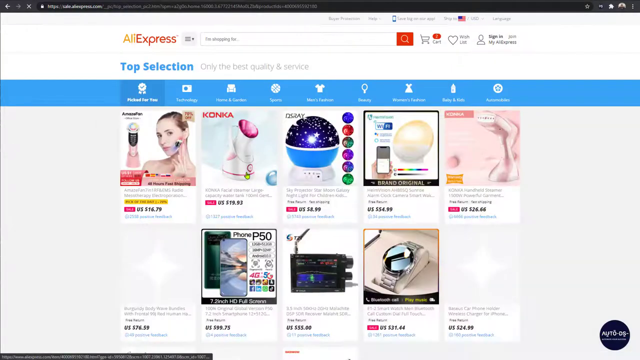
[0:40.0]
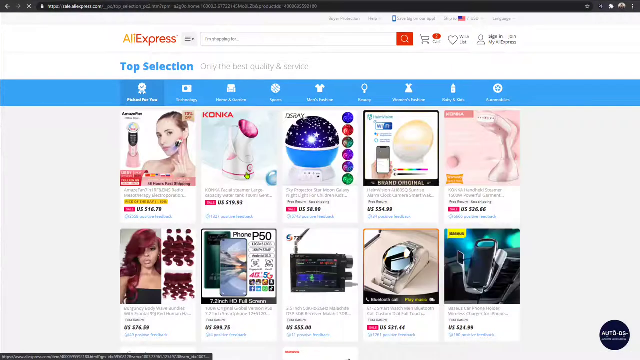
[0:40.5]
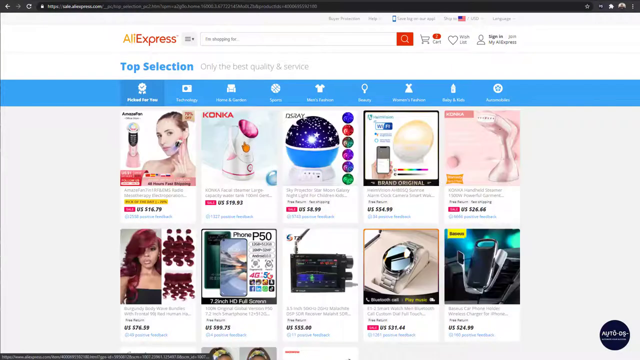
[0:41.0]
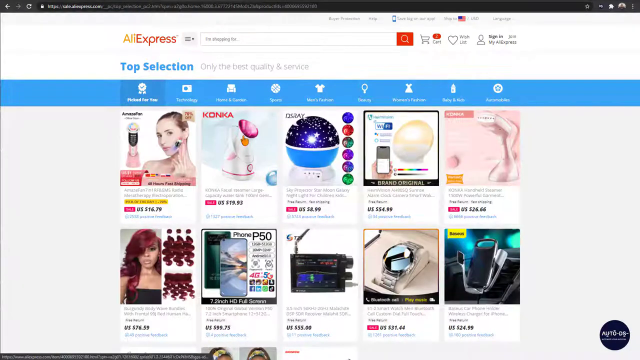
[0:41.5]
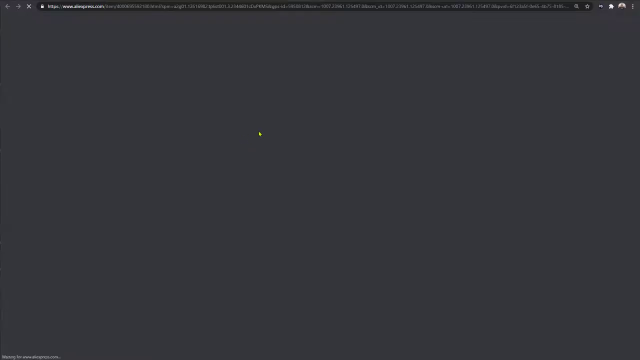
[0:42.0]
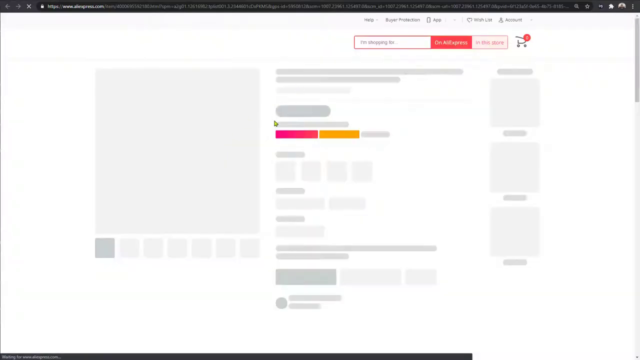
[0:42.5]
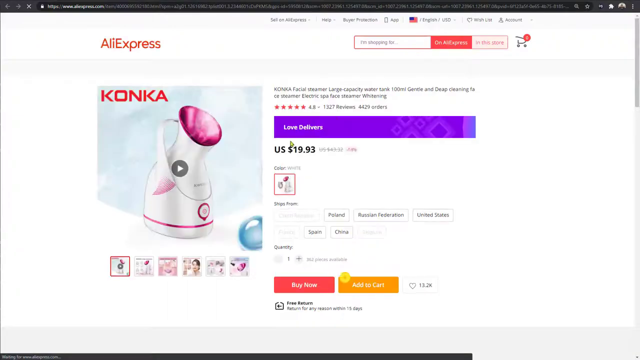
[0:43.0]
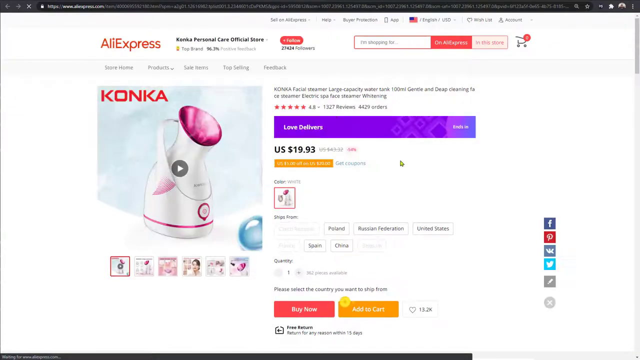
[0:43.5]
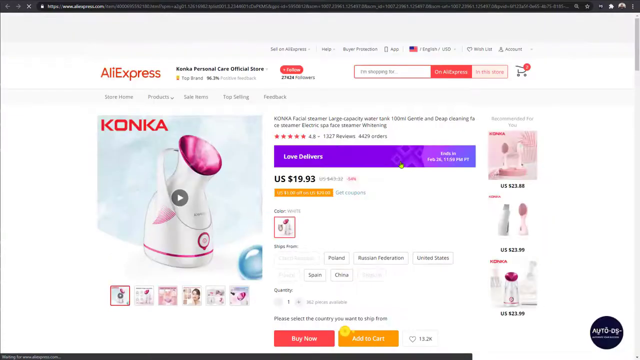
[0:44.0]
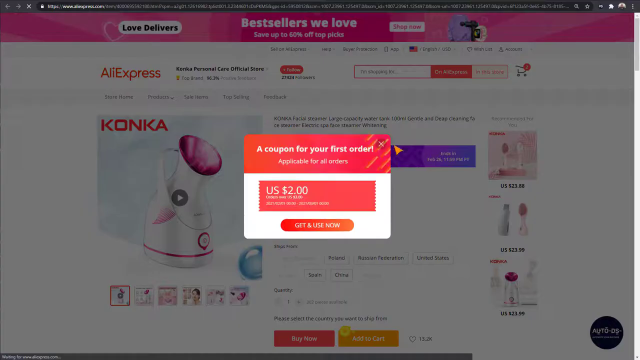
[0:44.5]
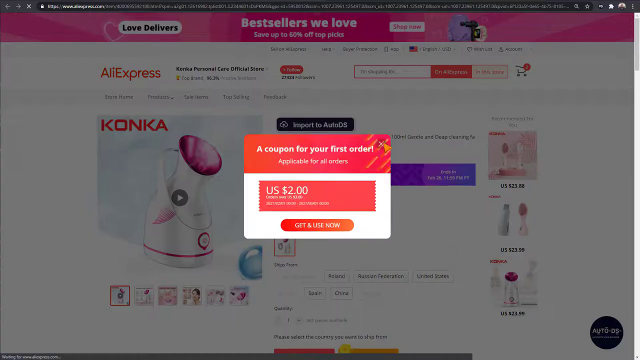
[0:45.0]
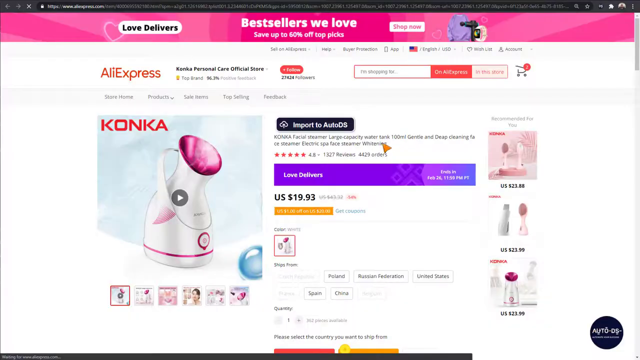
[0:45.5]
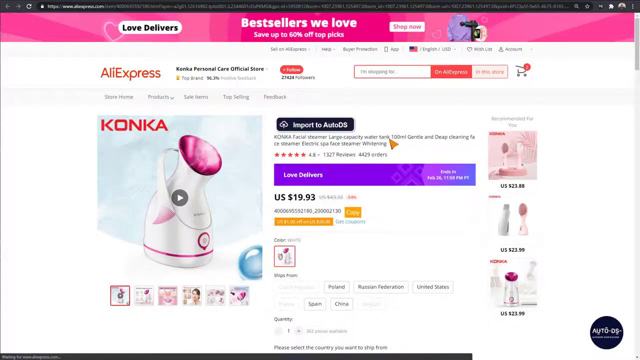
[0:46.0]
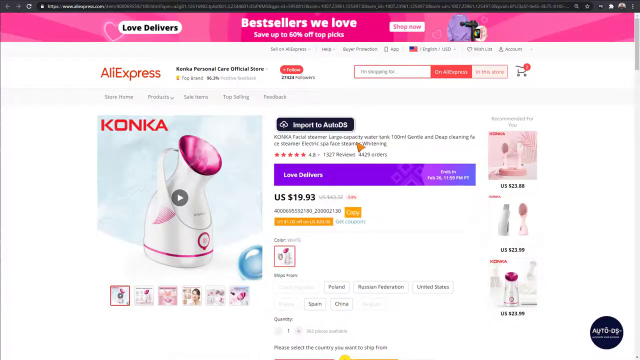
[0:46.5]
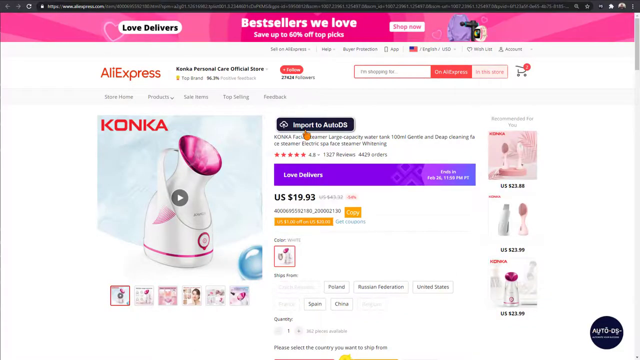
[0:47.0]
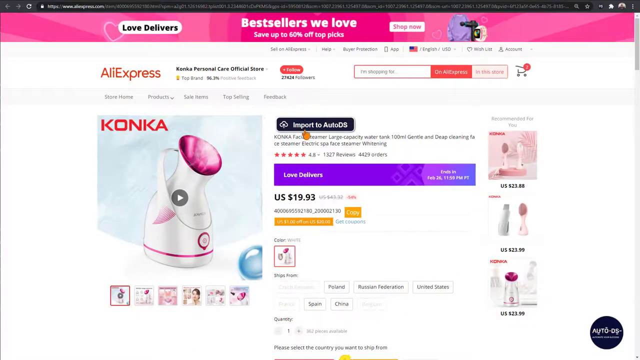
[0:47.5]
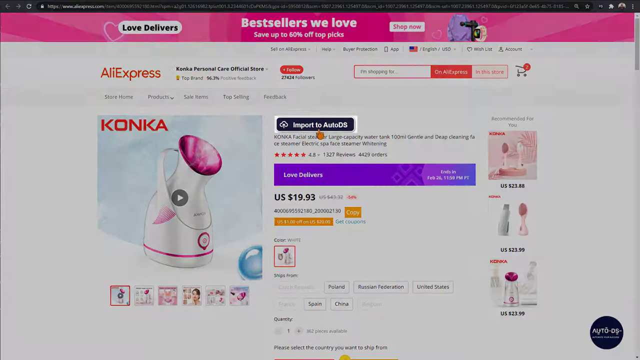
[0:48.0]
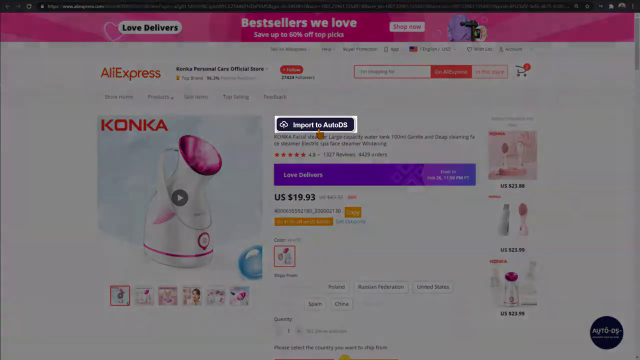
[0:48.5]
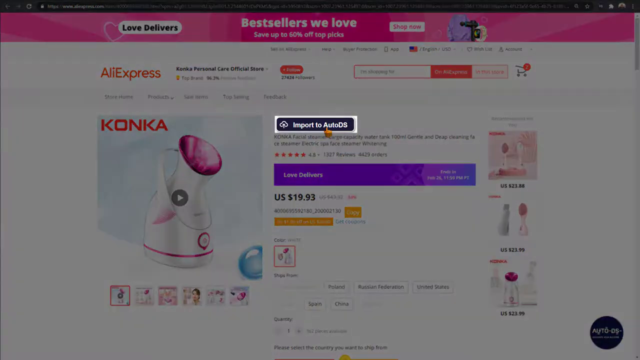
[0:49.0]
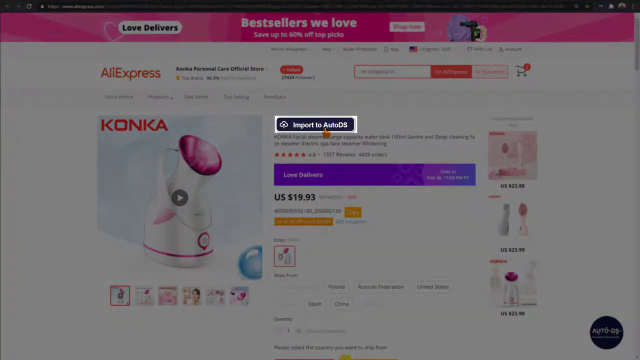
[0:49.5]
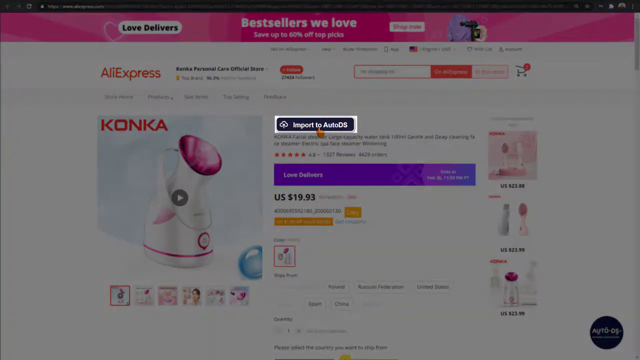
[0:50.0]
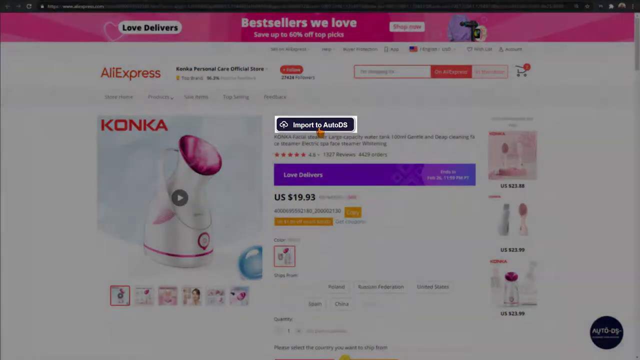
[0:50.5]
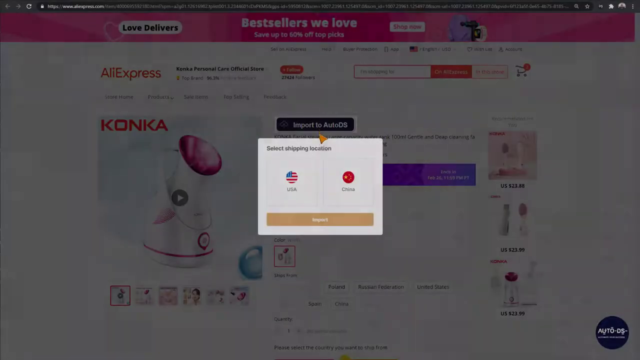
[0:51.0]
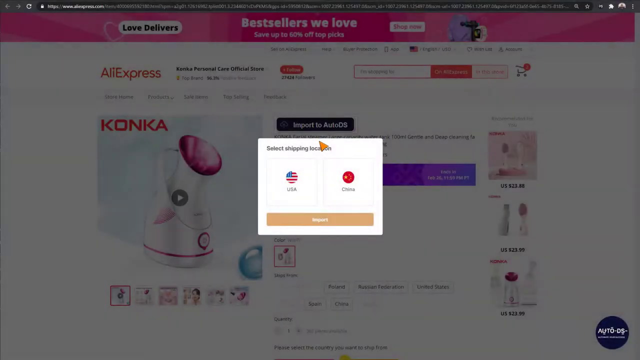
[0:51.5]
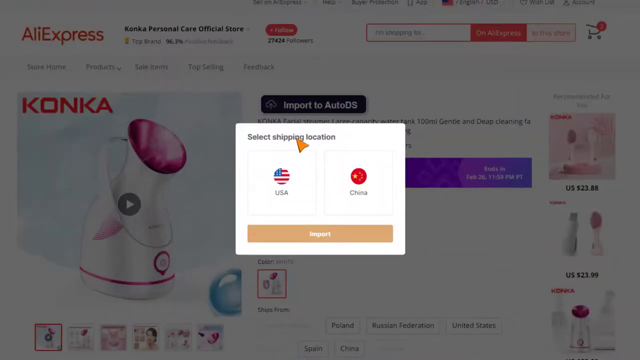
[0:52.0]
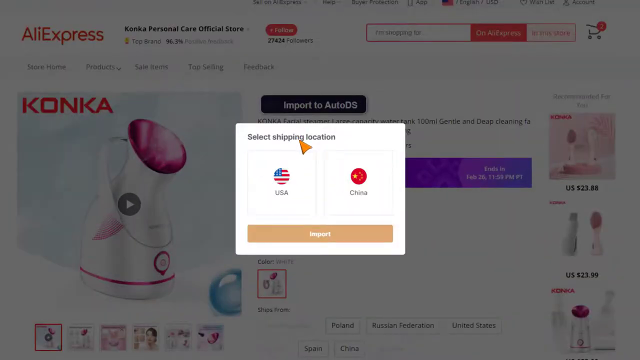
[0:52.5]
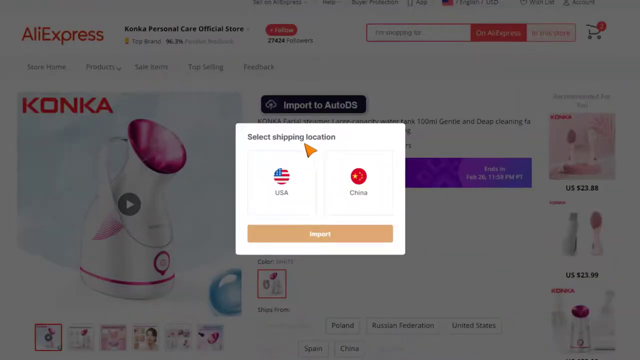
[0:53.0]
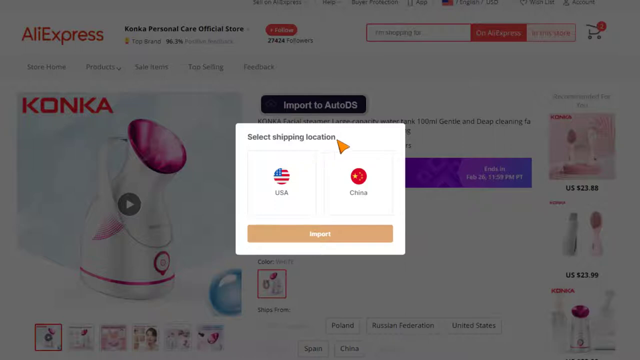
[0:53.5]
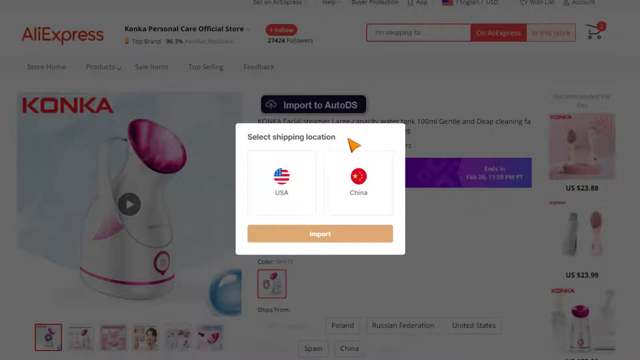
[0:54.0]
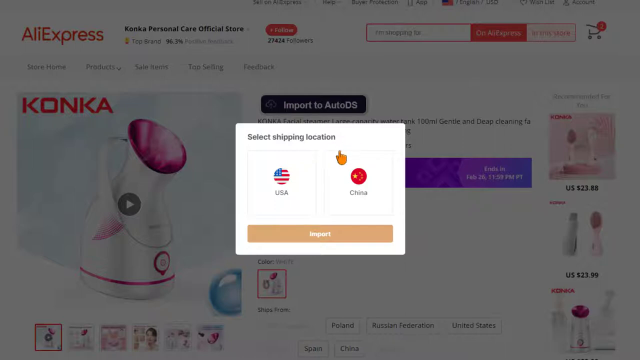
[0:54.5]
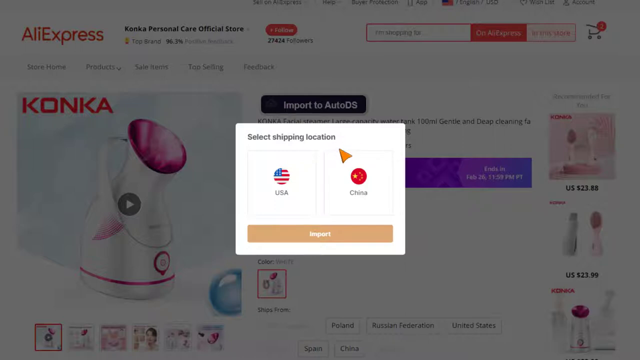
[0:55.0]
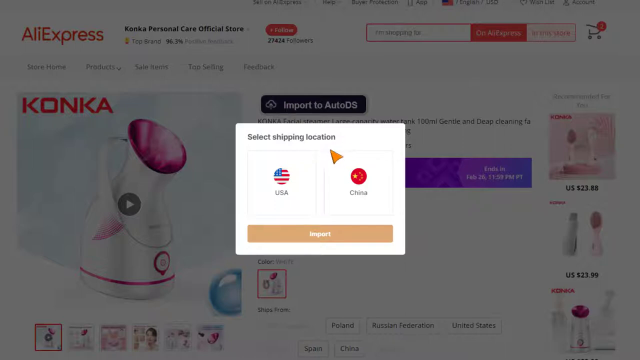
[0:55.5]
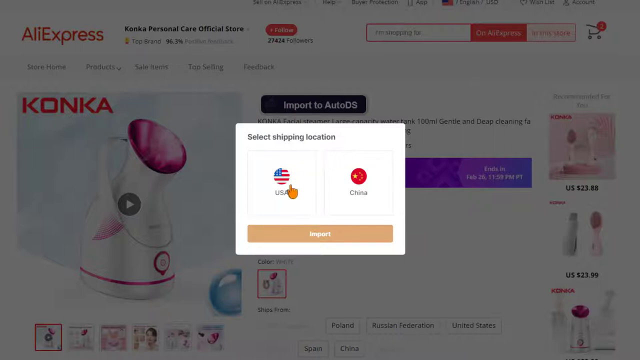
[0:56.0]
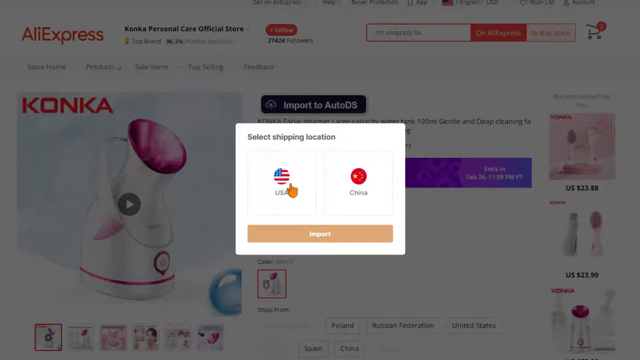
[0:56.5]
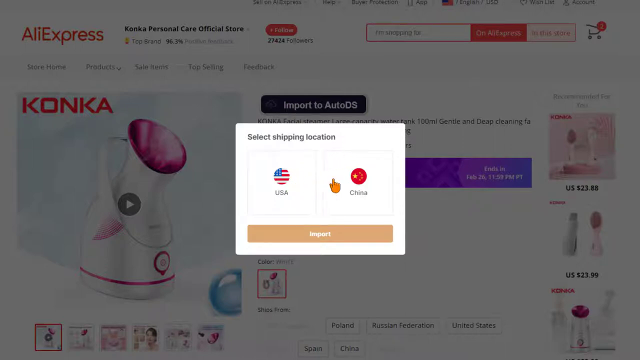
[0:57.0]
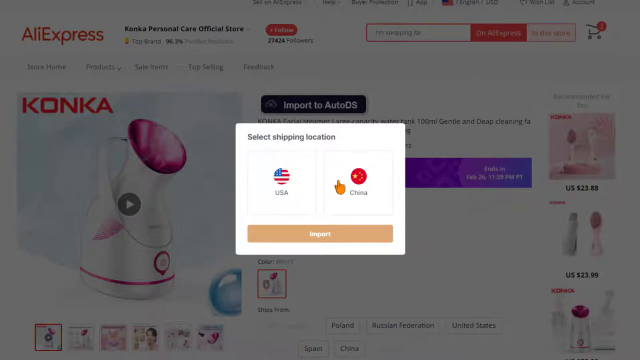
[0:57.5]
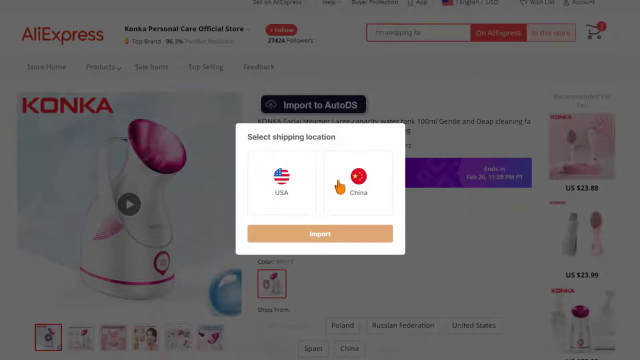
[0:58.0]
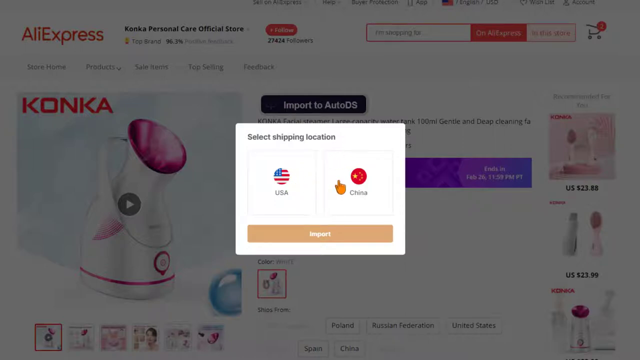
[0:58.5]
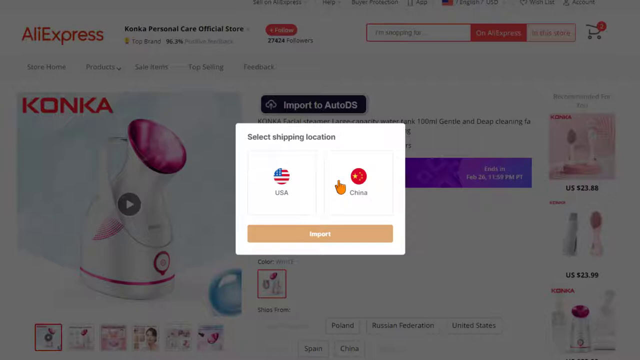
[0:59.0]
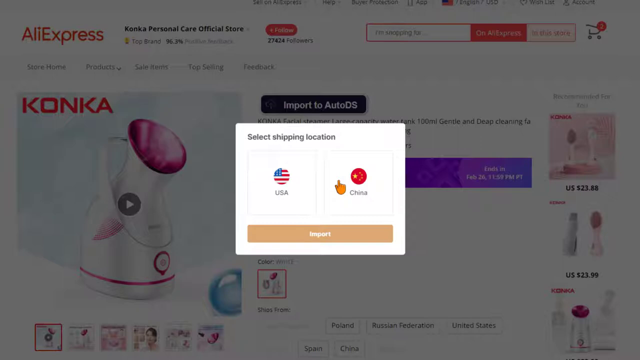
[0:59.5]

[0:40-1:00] The person is still on AliExpress, looking at what appears to be a facial product, possibly a massager or something that shrinks pores; the text is too small to read clearly. On the left side, blue text reads "top selection" and gray text reads "only the best quality and service." The person clicks on the product image, which is white and pink and is a video with a play button. Text reads "KONKA facial," followed by an unclear word, possibly steamer or massager, then "large capacity, 100 ml, gentle and deep cleaning." A price of $19.93 each is shown. The person hovers over a button labeled "import," which gives access to a shipping location choice of USA or China.